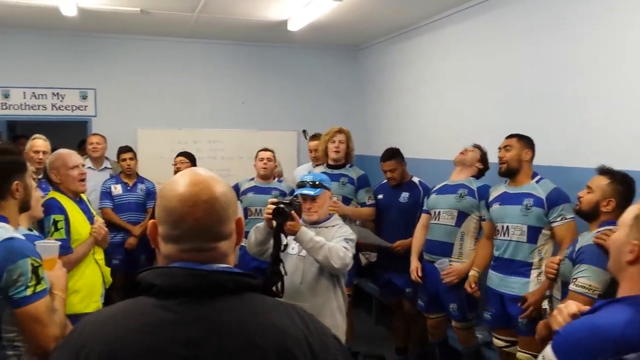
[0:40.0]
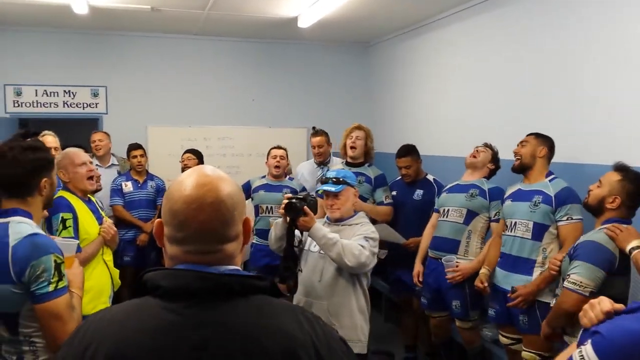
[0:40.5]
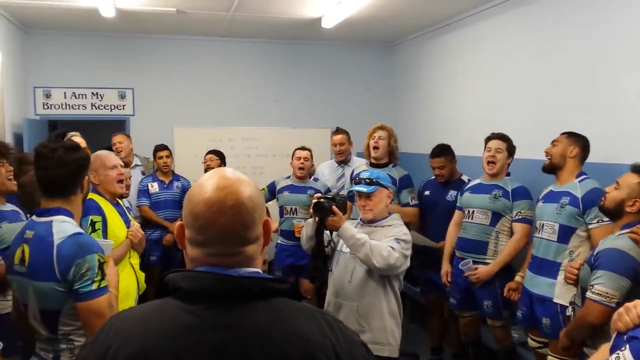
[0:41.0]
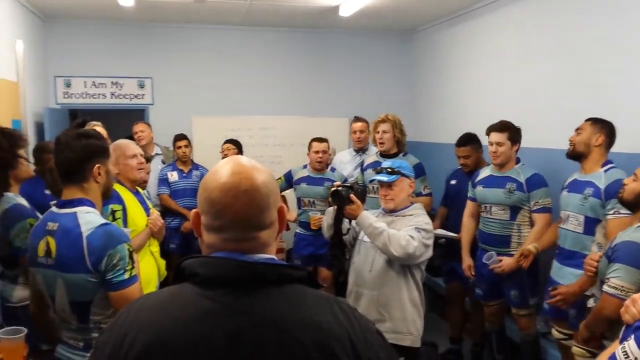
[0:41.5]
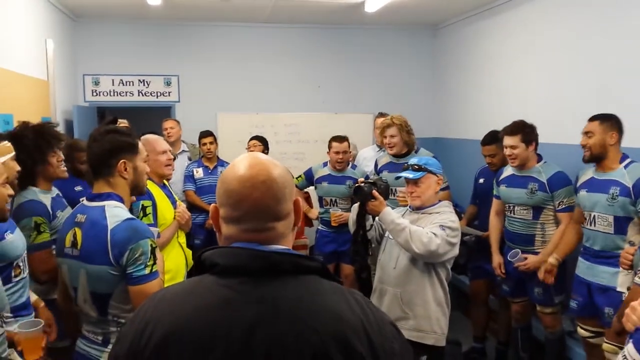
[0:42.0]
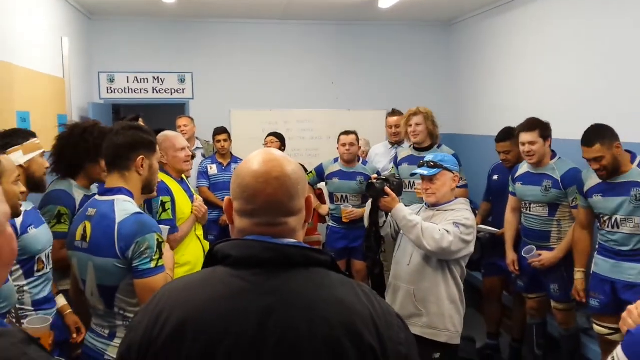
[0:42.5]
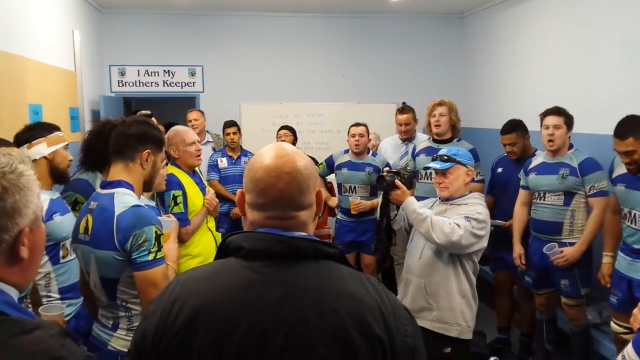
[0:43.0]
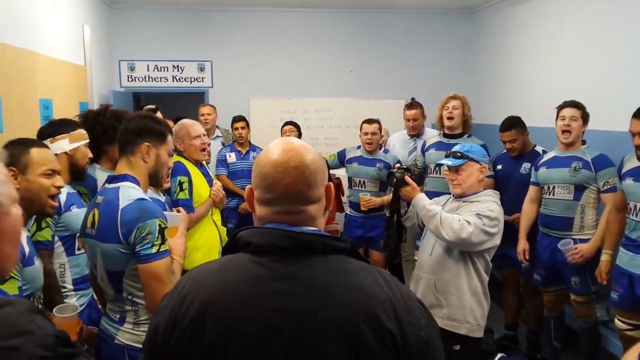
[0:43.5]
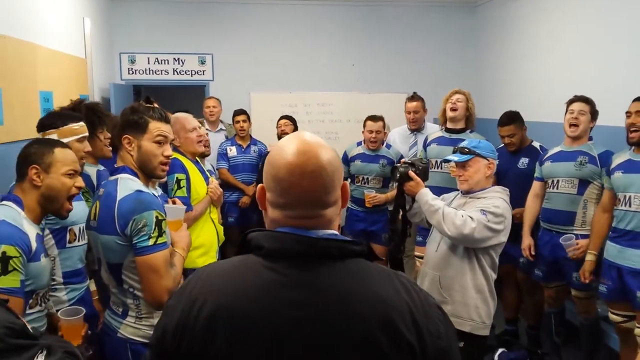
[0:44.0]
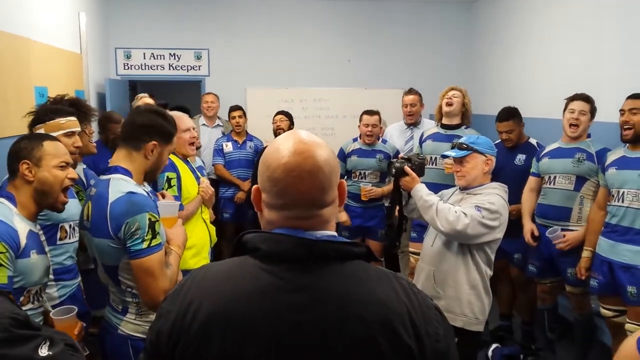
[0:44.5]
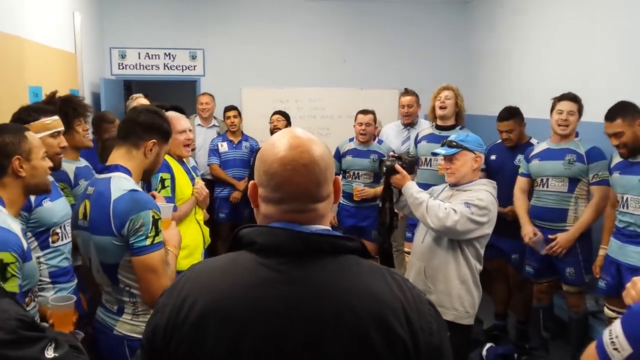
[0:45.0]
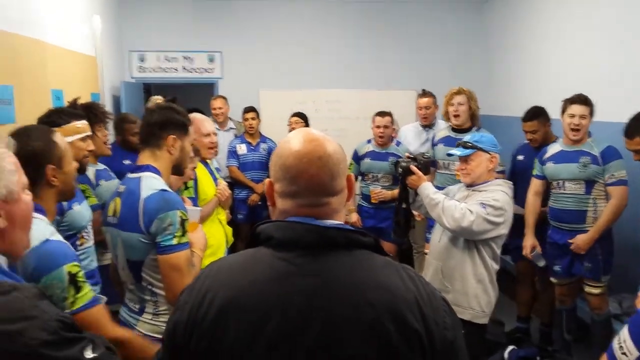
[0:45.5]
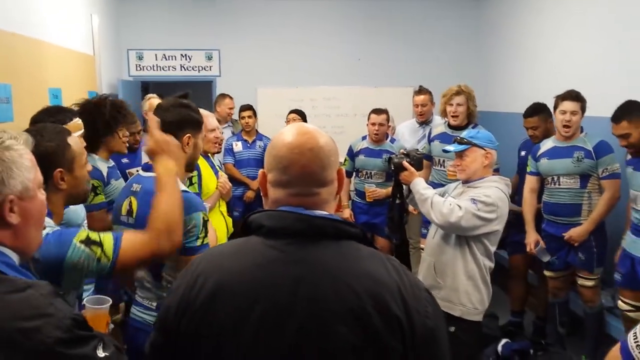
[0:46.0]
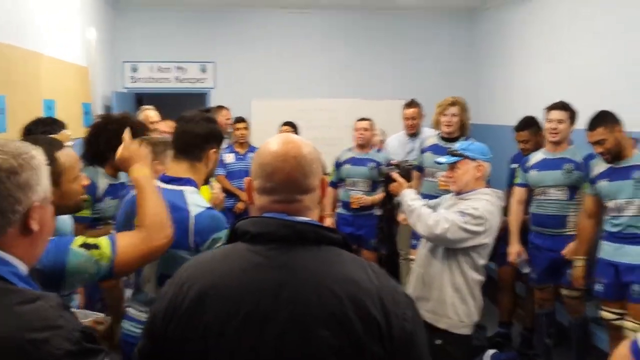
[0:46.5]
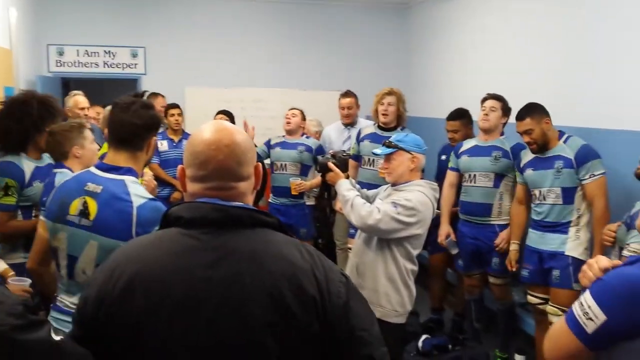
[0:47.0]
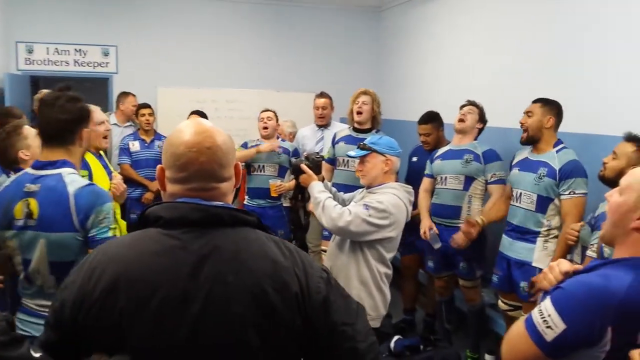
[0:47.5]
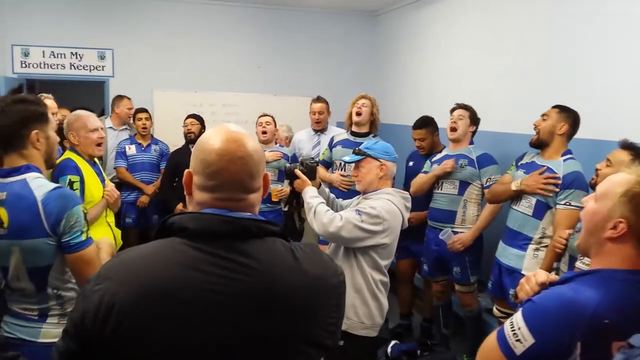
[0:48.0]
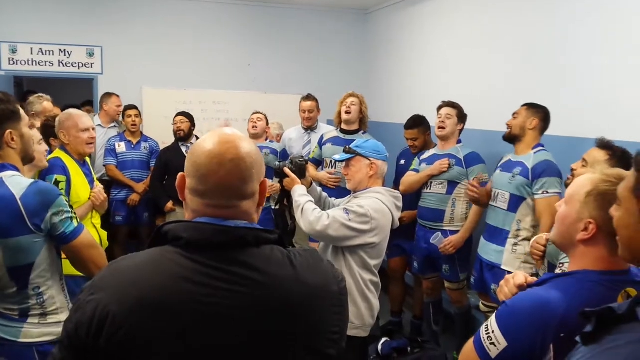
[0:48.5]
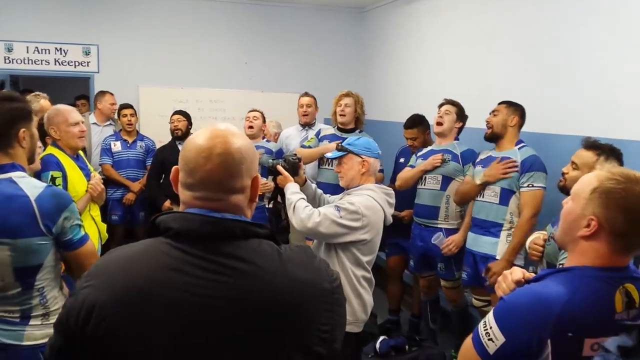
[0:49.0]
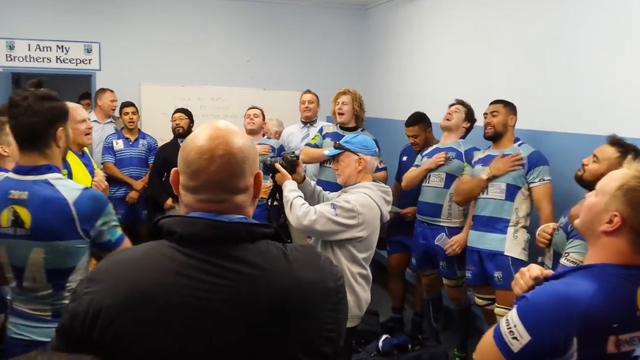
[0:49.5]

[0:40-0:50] In the same room, the players seem to be singing their hearts out, much more expressive now, with some of them putting a hand over their chest or heart. A whiteboard with some handwriting on it is against the wall next to the opening. The wall has two colors: the top half is light blue and the bottom half is dark blue. There are fluorescent lights on the ceiling, and on the left side there appears to be a cork board with blue signs pinned to it.